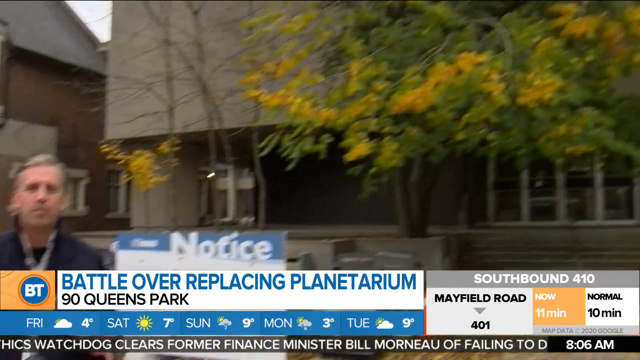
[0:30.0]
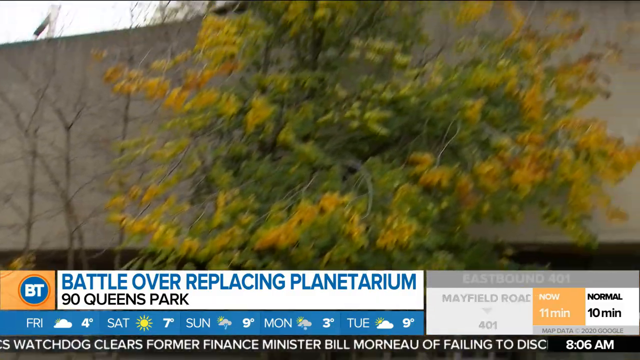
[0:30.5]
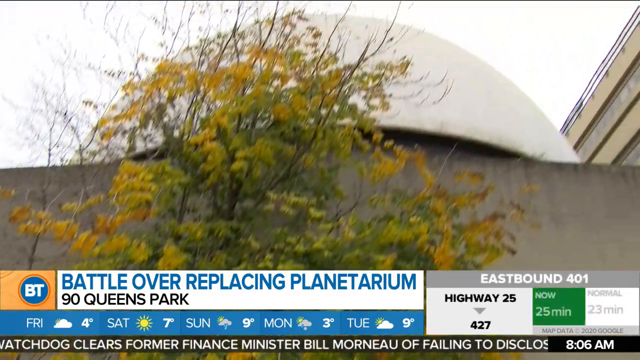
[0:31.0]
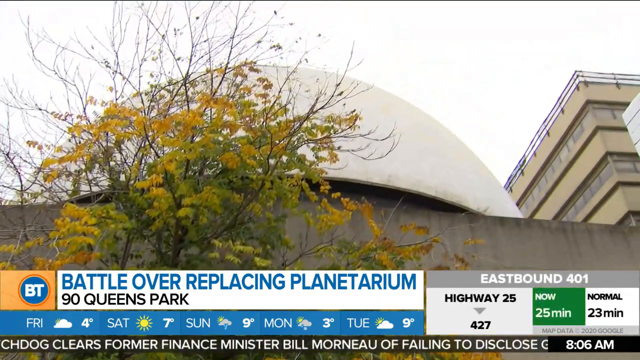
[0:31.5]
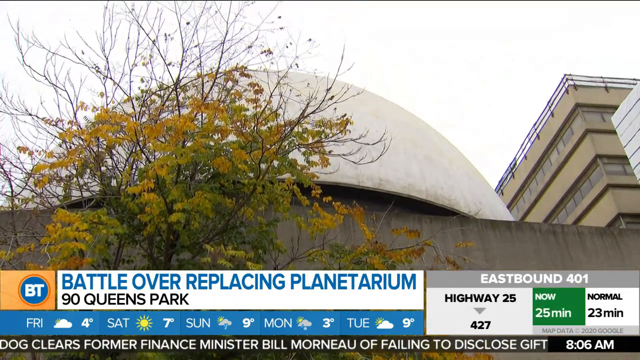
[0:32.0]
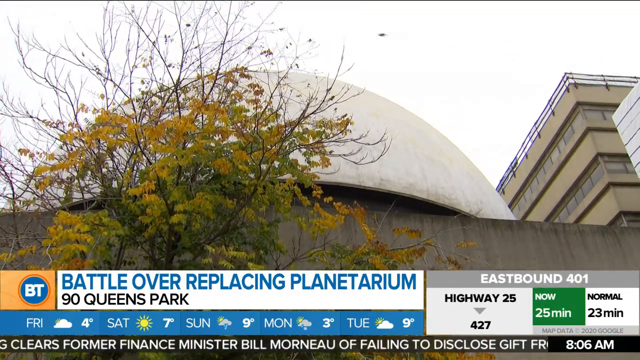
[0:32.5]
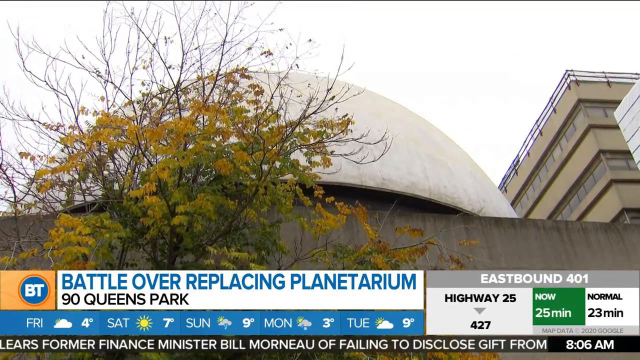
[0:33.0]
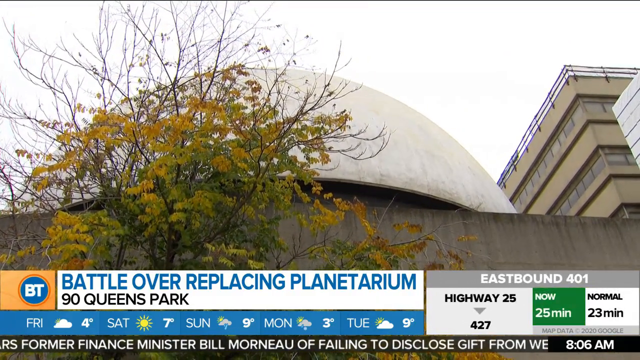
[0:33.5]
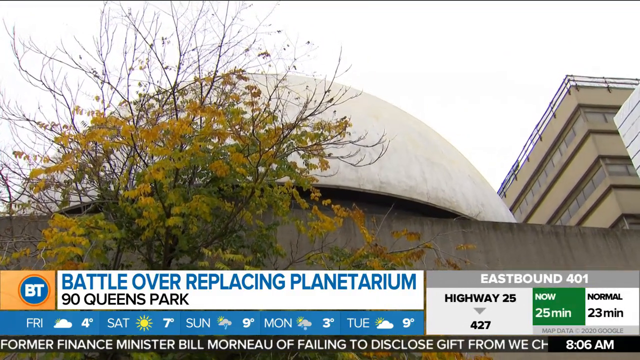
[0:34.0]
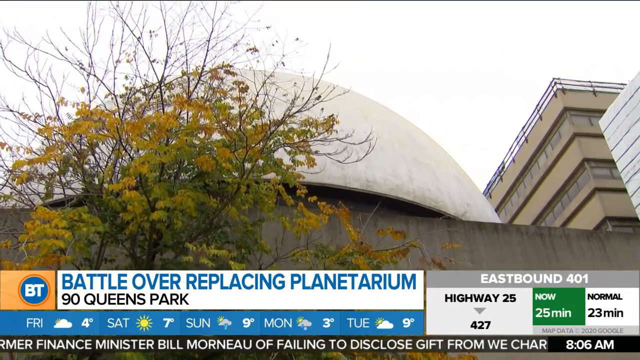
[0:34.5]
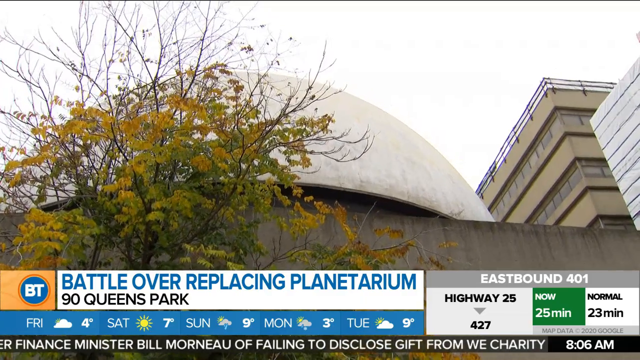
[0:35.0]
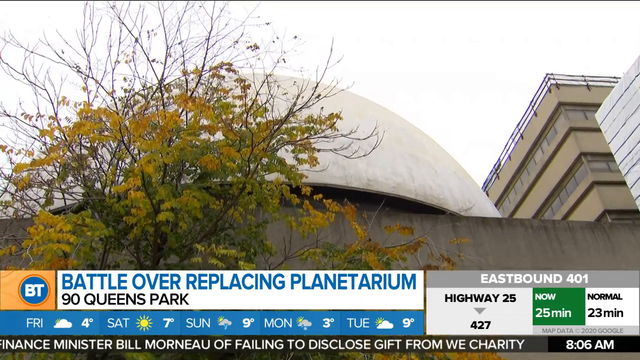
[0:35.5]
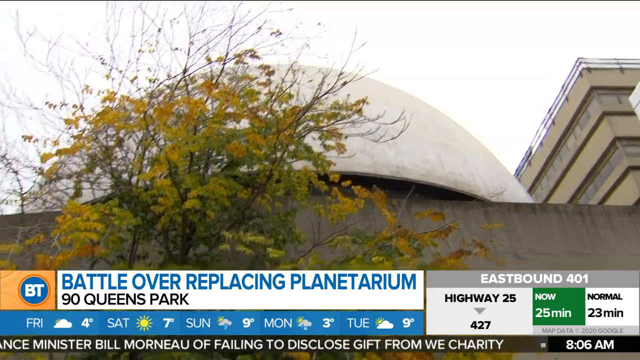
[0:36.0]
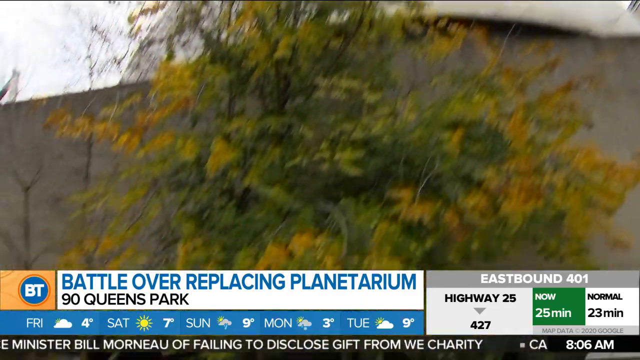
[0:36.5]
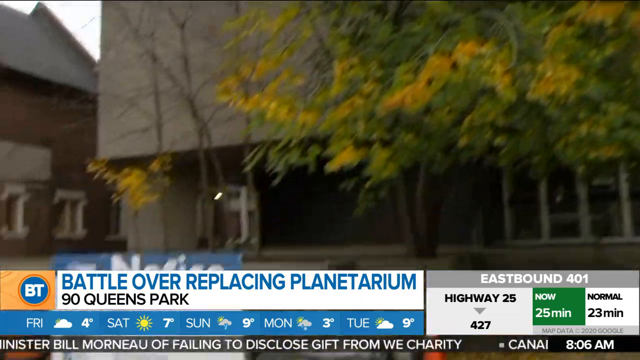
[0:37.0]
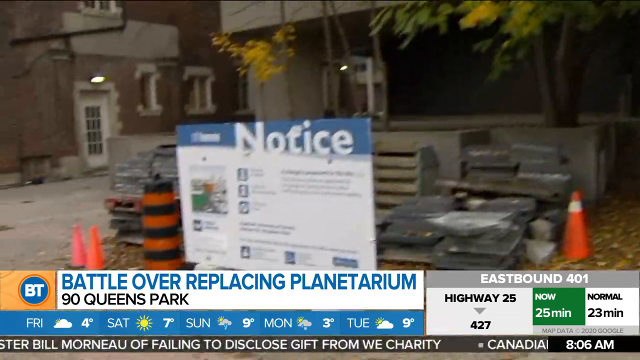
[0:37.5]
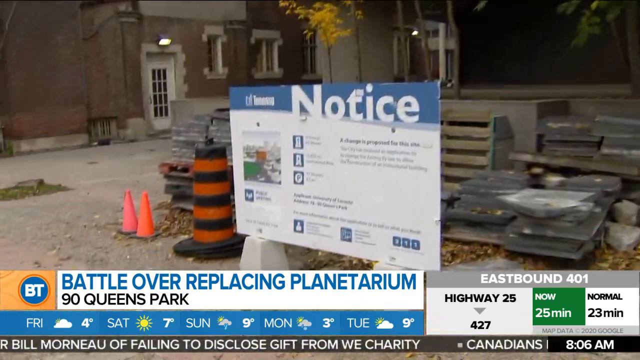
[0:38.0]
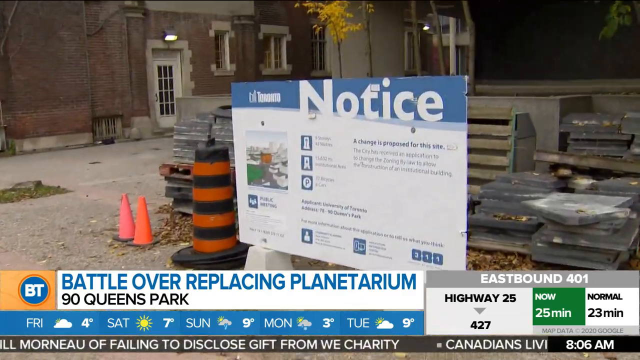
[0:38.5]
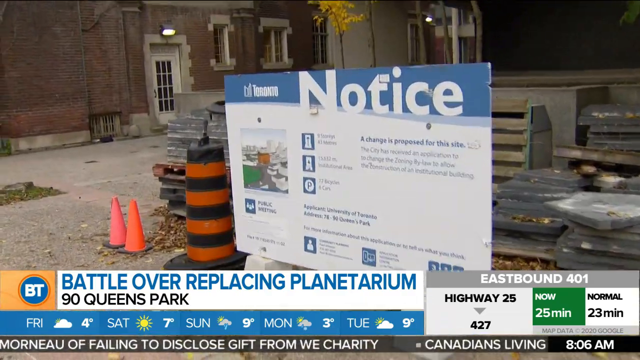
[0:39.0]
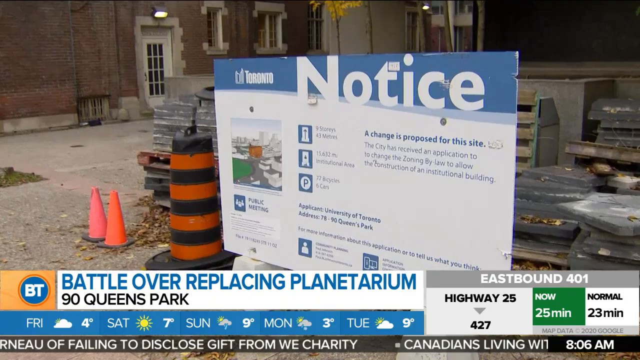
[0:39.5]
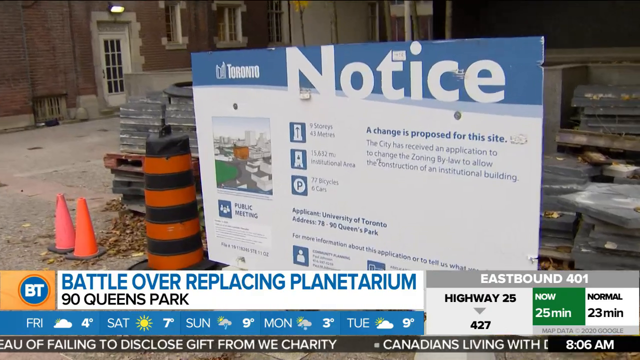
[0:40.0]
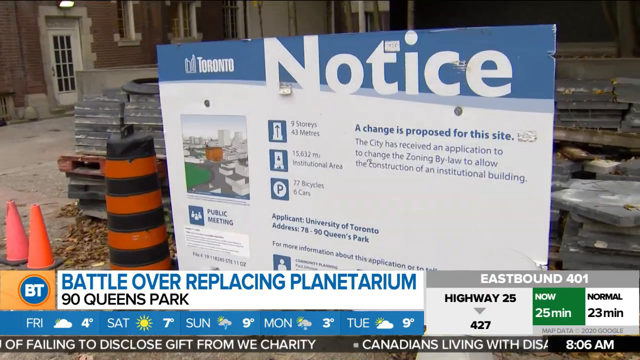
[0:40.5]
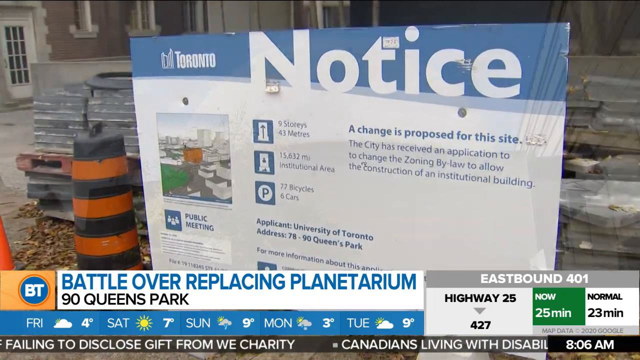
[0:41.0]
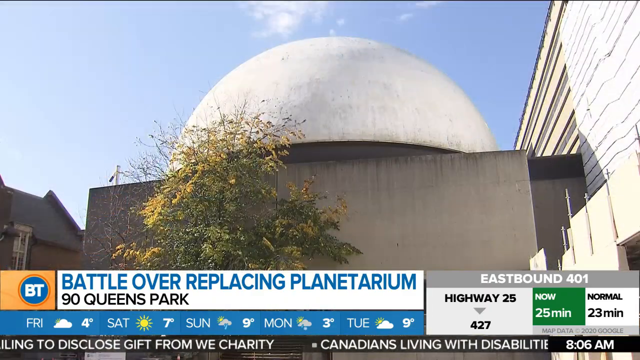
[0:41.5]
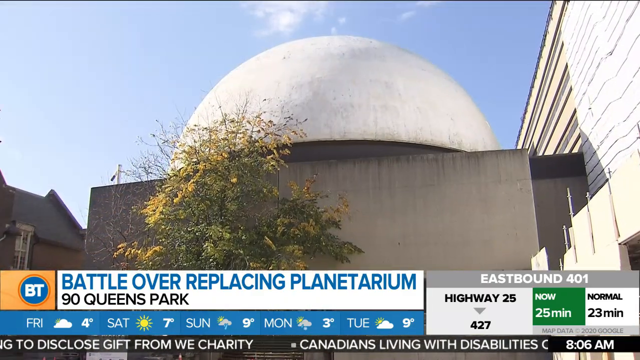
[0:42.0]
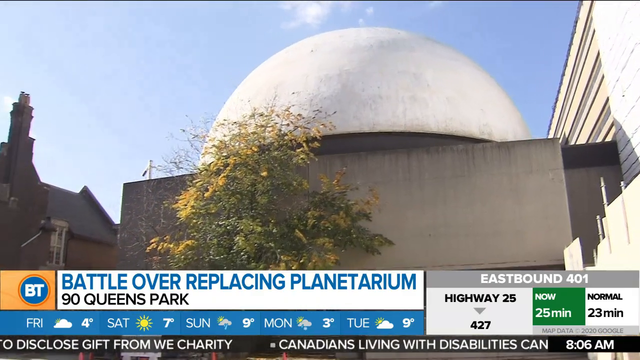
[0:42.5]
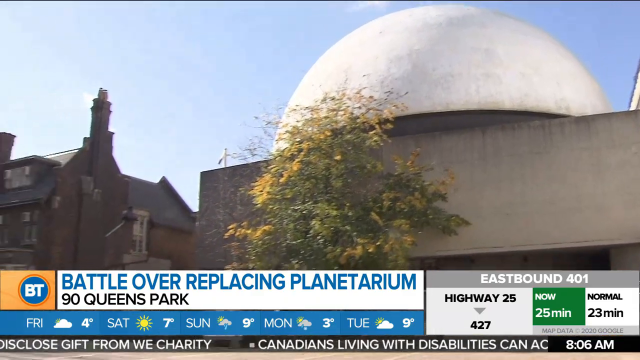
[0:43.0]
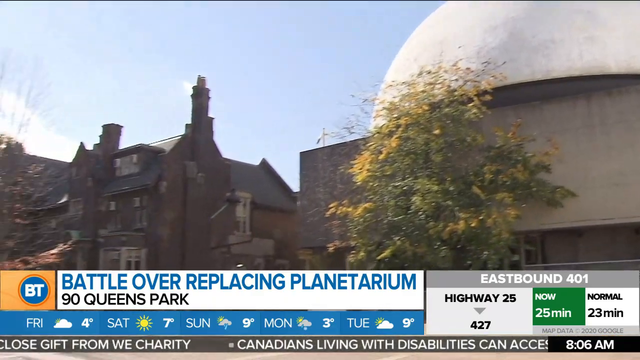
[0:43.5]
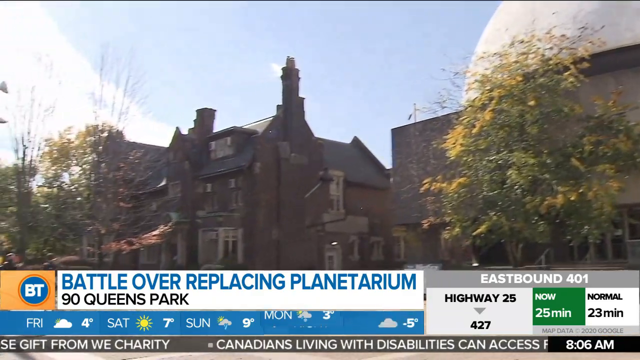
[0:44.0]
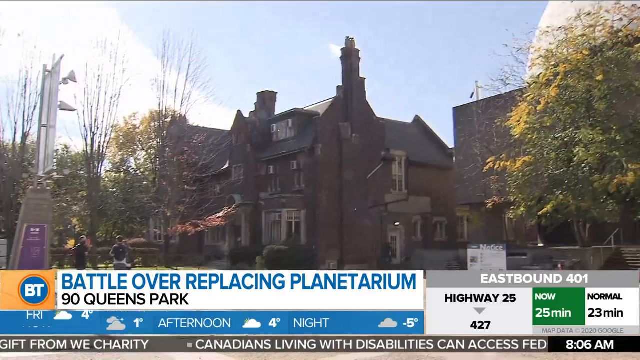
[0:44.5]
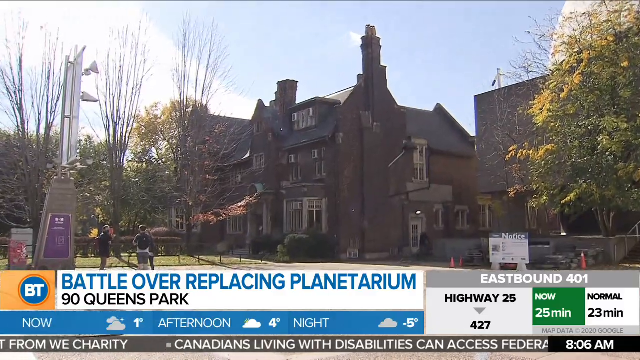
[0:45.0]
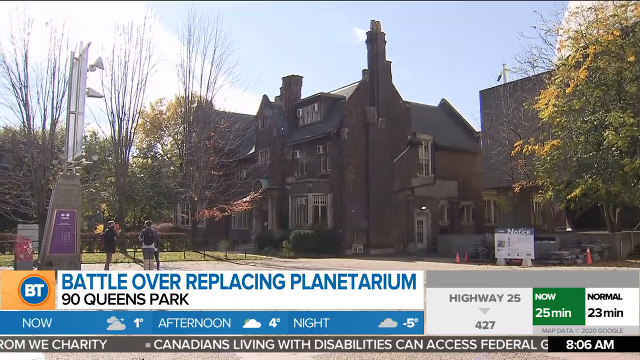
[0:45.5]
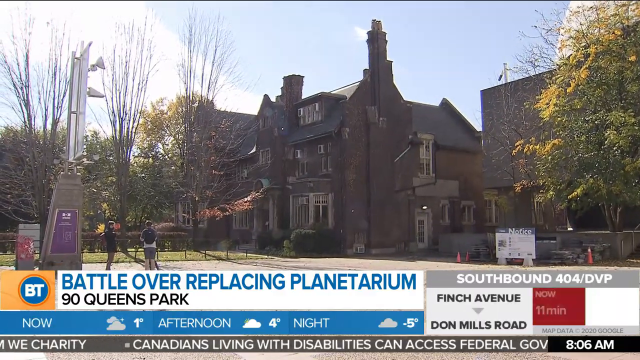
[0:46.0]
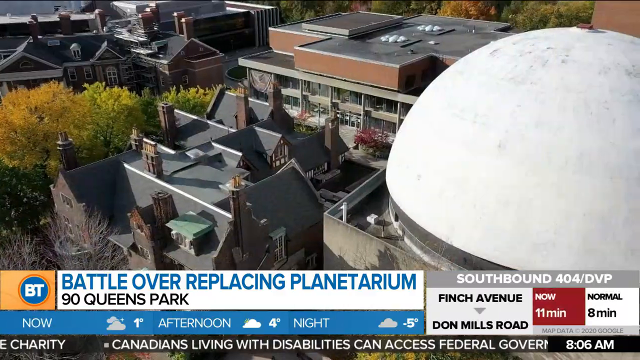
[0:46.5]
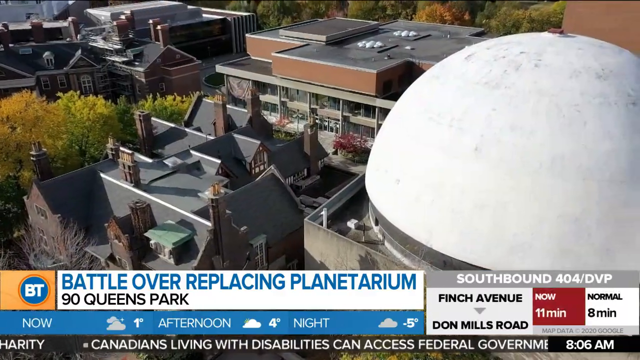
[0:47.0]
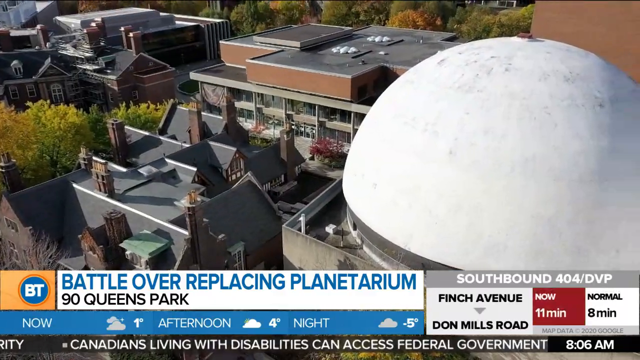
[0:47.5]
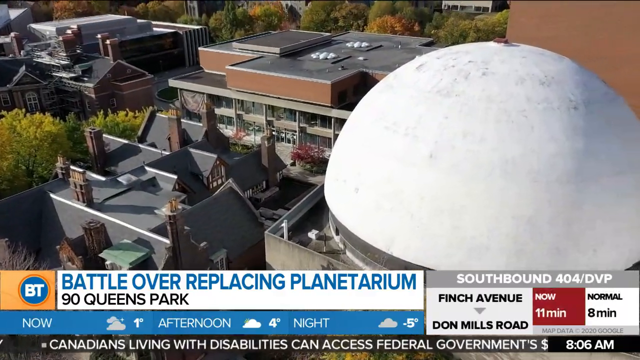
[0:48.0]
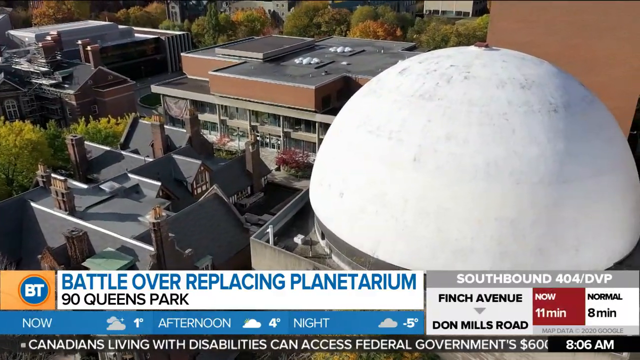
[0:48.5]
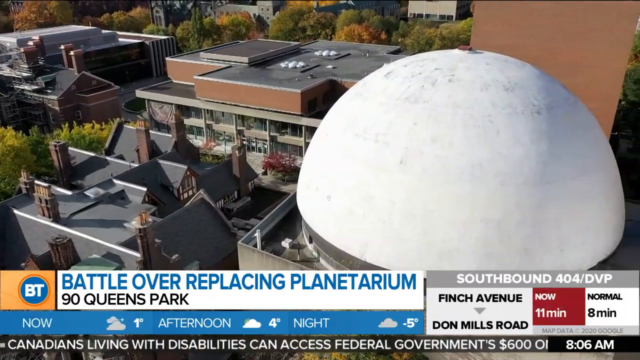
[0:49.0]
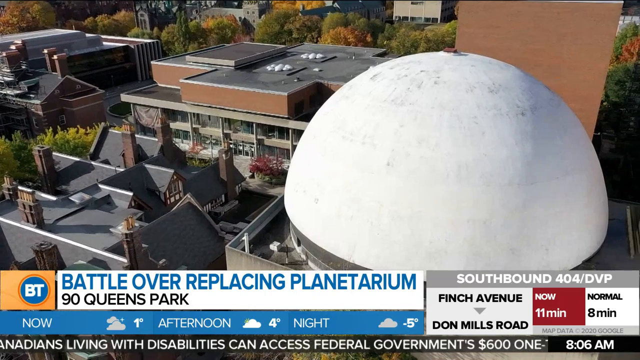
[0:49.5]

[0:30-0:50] A male presenter with a mic reports the news and shows a building, and an aerial view shows the buildings in the area. The camera shows a poster, a return notice. Headlines appear and disappear on the screen, along with the forecast. Behind the presenter is a small sign with "notice" written on it, outside the tall buildings in the city.